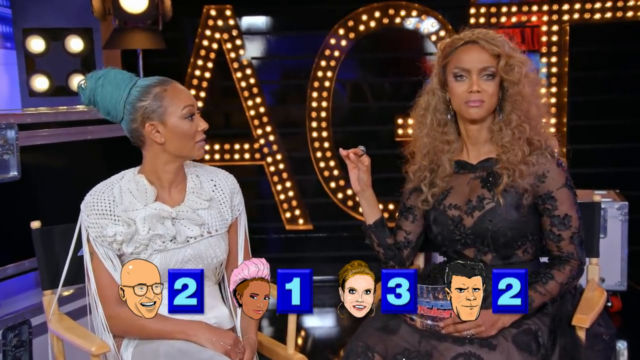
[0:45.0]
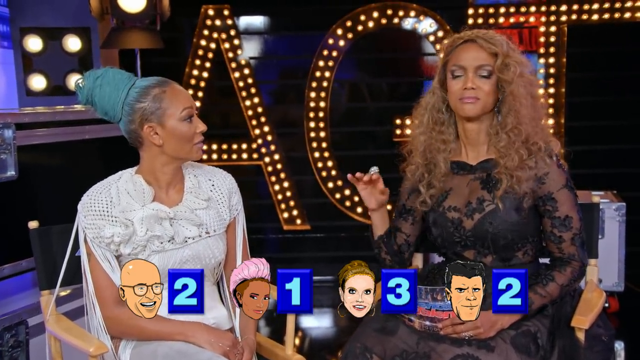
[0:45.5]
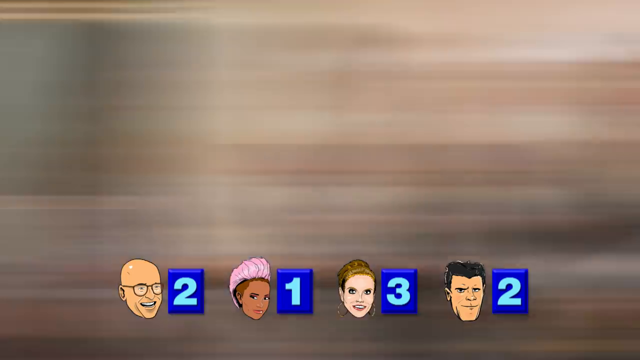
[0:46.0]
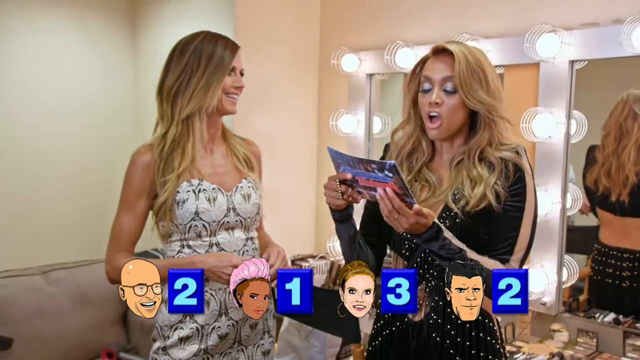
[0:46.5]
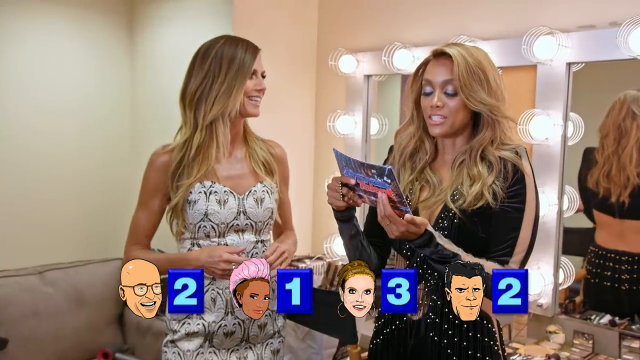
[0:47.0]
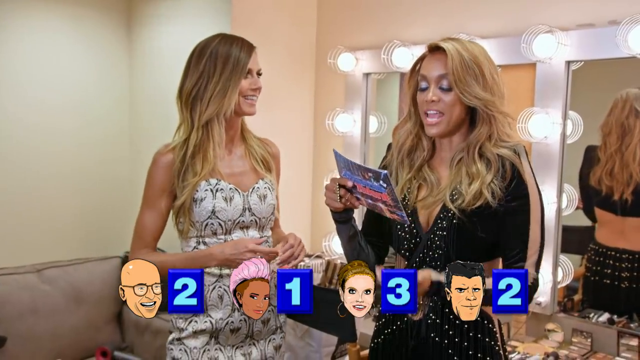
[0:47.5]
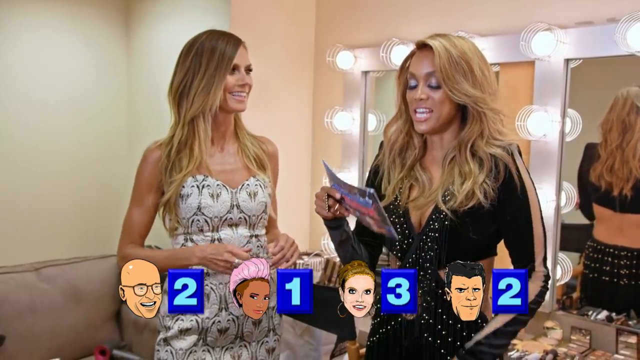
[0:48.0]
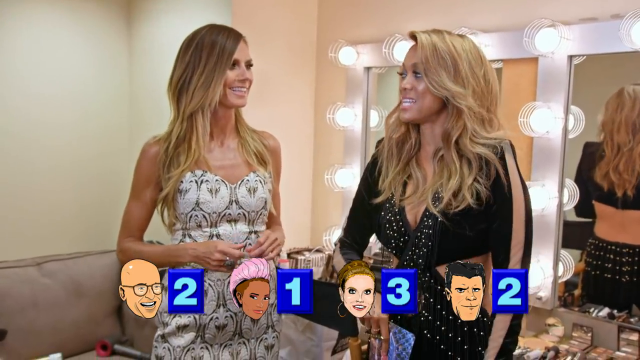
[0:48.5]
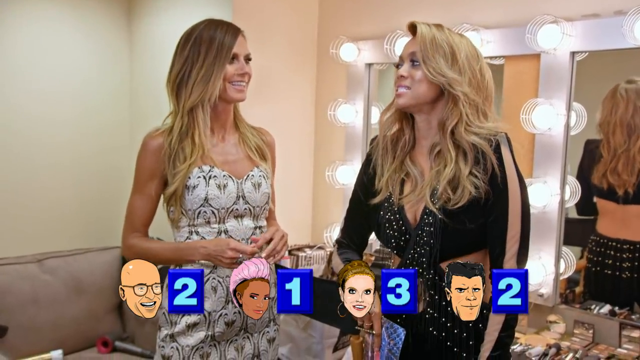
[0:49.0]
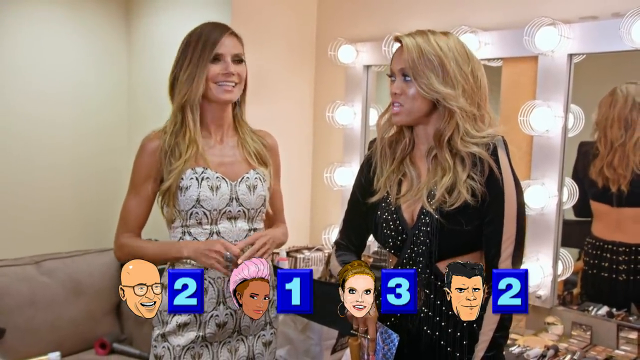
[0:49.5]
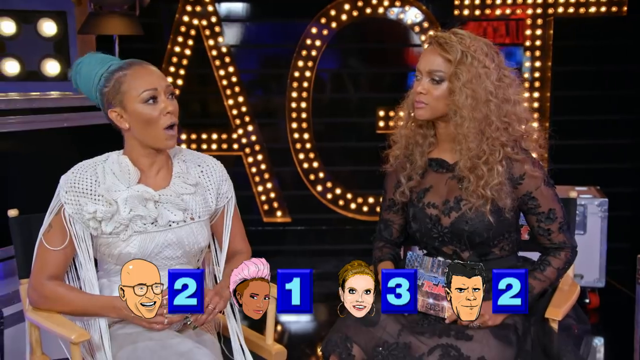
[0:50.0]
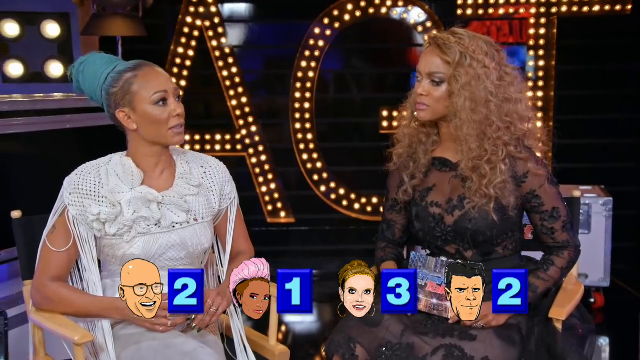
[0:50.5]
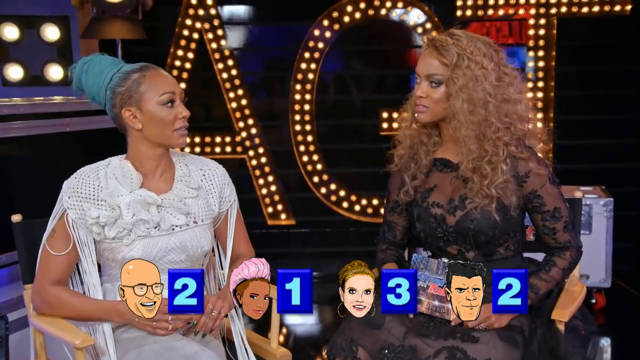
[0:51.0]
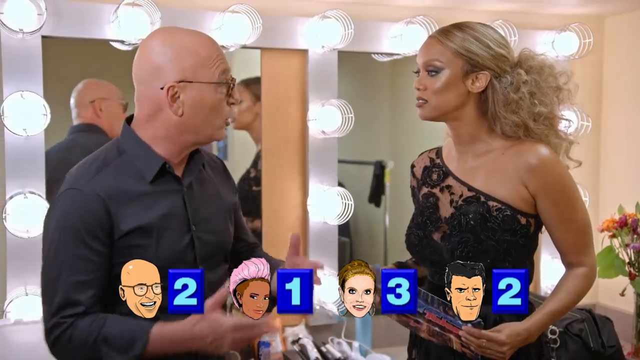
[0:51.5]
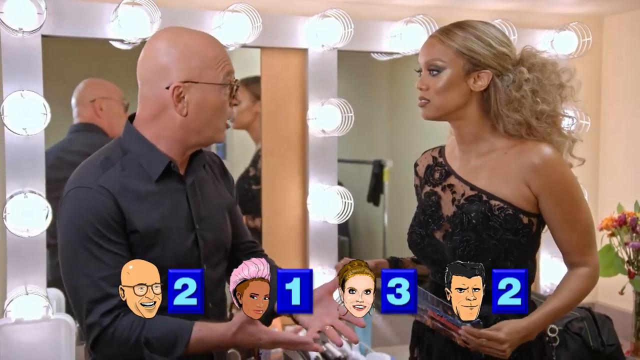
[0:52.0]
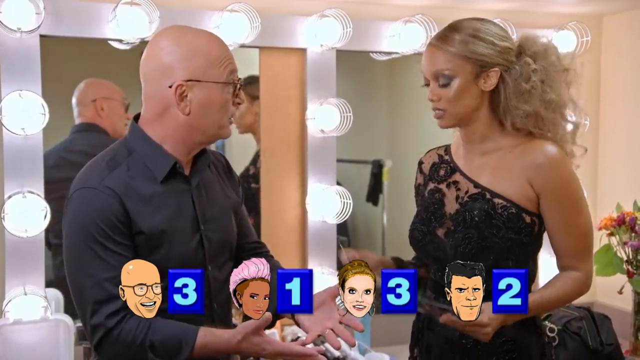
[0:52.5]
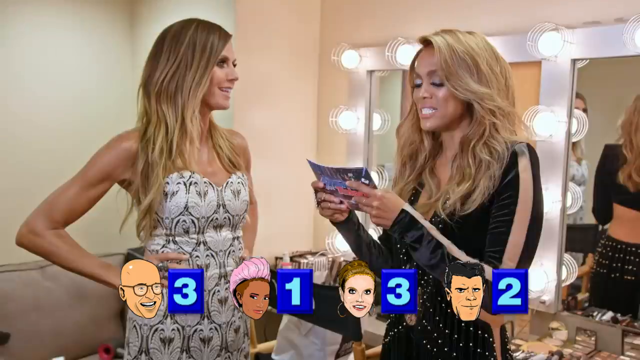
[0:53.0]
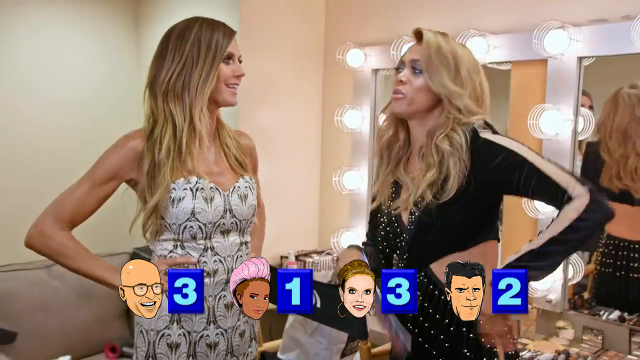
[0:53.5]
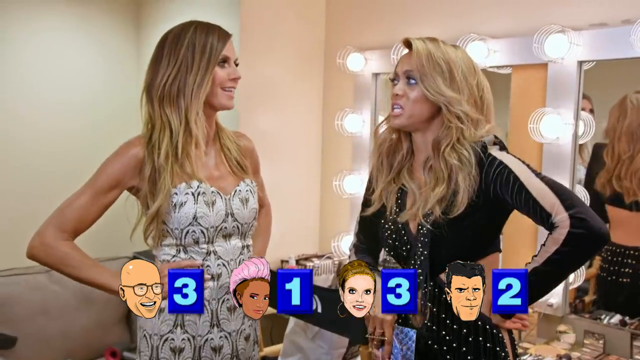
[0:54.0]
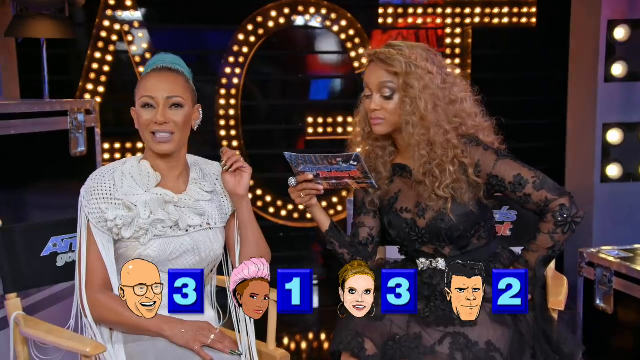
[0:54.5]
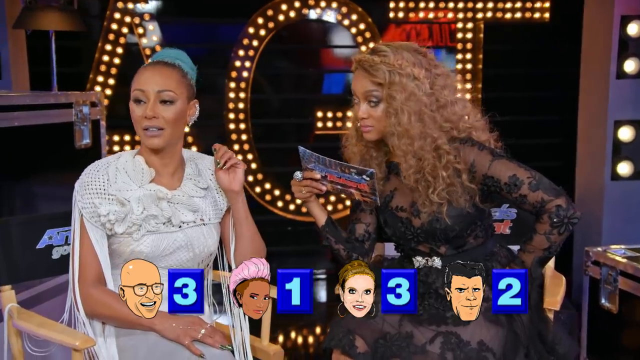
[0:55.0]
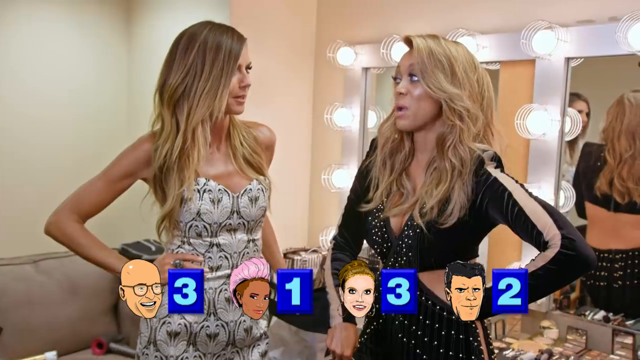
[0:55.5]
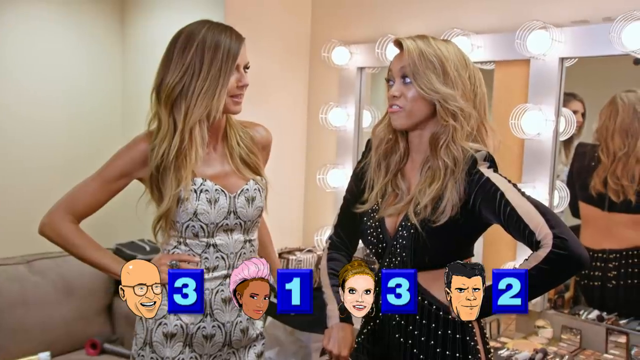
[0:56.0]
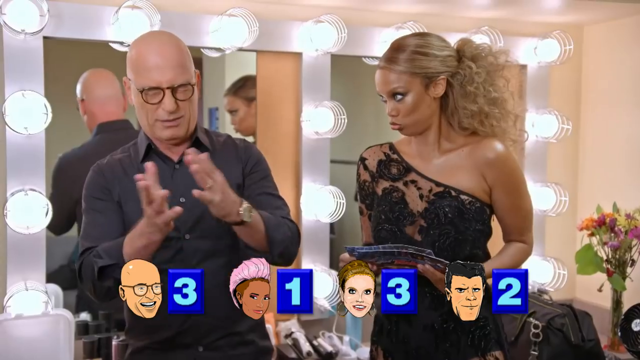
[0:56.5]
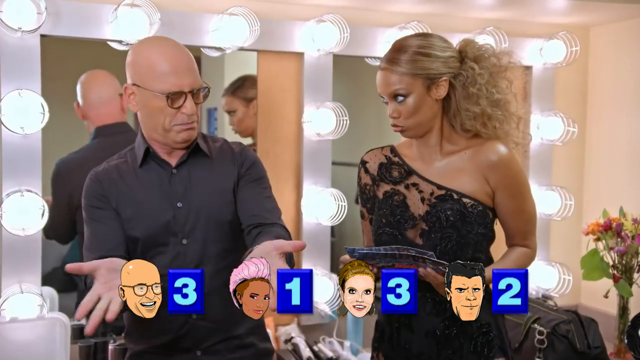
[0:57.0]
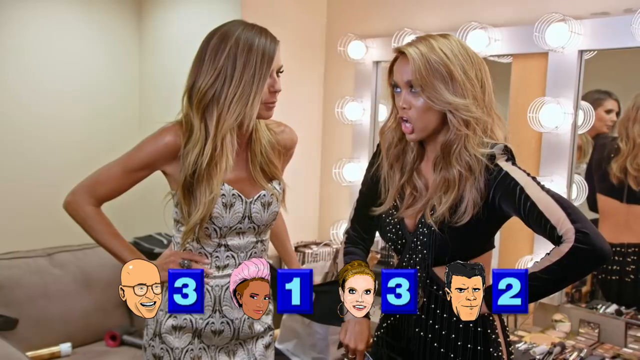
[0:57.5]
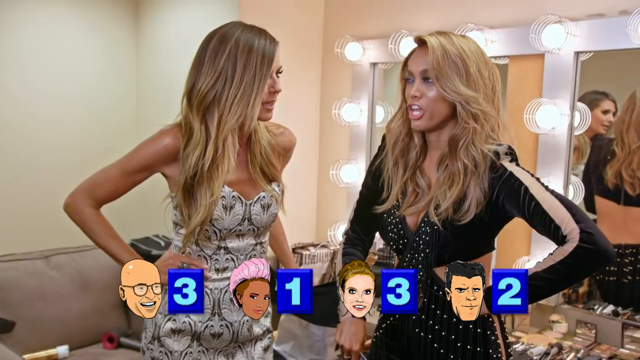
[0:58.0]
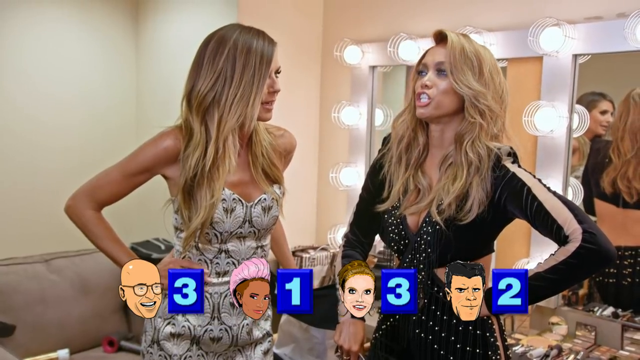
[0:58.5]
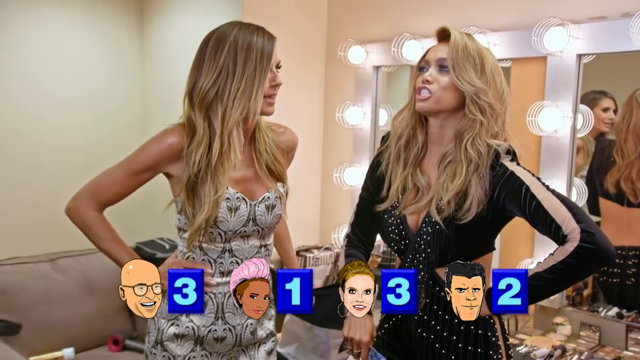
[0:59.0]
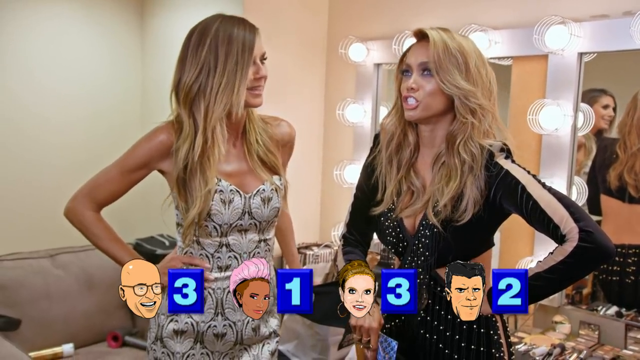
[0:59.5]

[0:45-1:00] Tyra talks to Heidi Klum as they stand backstage in Heidi's makeup dressing room. Heidi has her hand on her hip and looks at Tyra; it seems to be a pleasant conversation, with Heidi kind of wiggling her body and smiling, while Tyra speaks with her hand on her hip. The conversation with Howie appears pretty serious; he looks at Tyra and uses his hands as he talks. Tyra is not shown with Simon Cowell here, only with three judges. With the other, dark-skinned judge the conversation is not pleasant: the judge turns, with kind of a really disturbed look on her face, and looks away from Tyra. Tyra uses her note cards in each interview. Howie puts his hand out as if to say "what" and looks very serious.